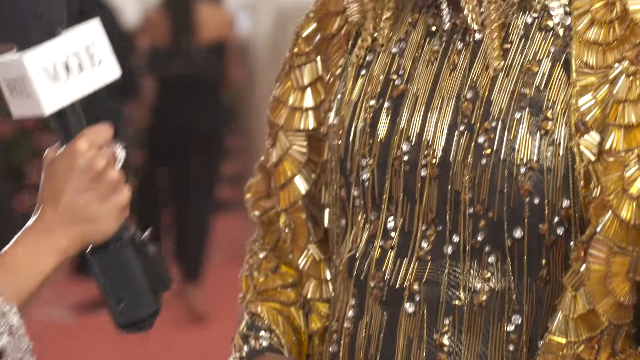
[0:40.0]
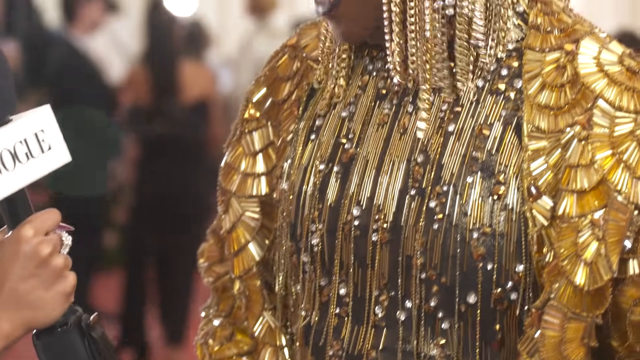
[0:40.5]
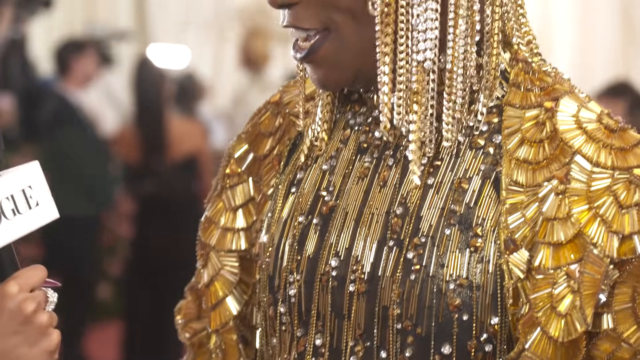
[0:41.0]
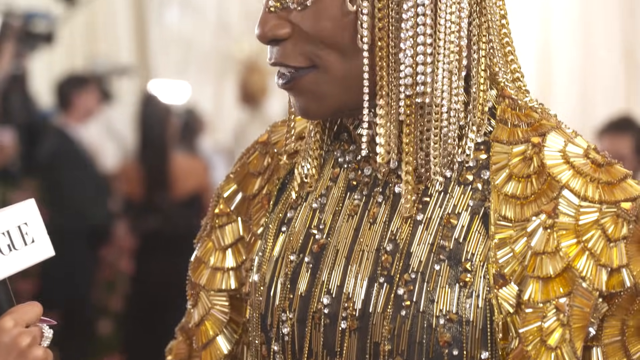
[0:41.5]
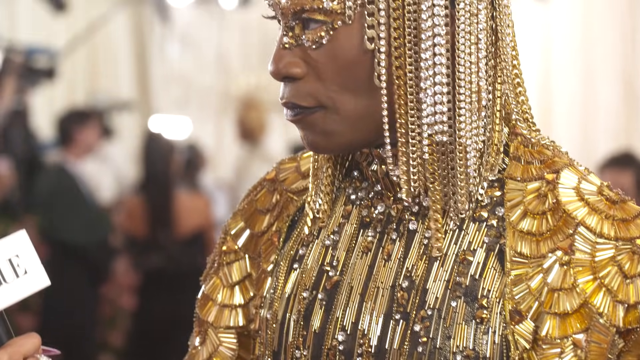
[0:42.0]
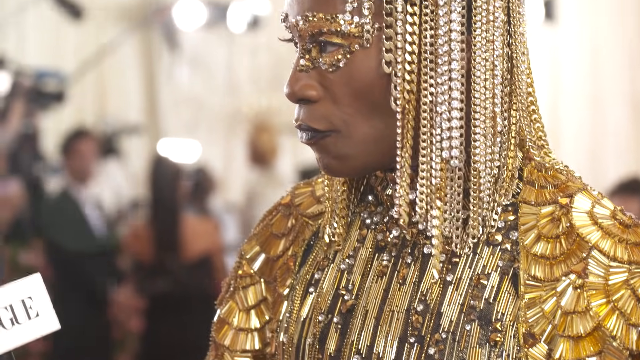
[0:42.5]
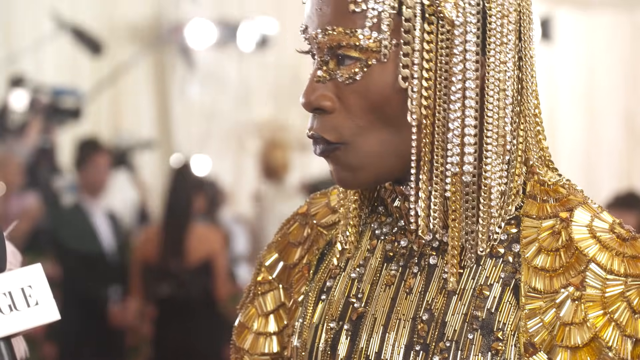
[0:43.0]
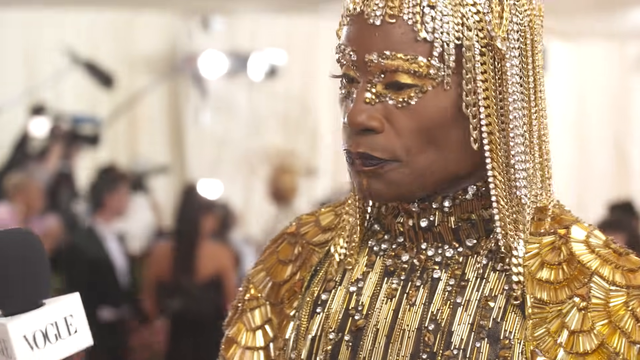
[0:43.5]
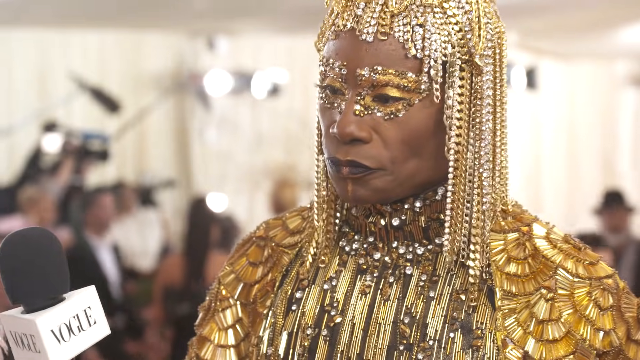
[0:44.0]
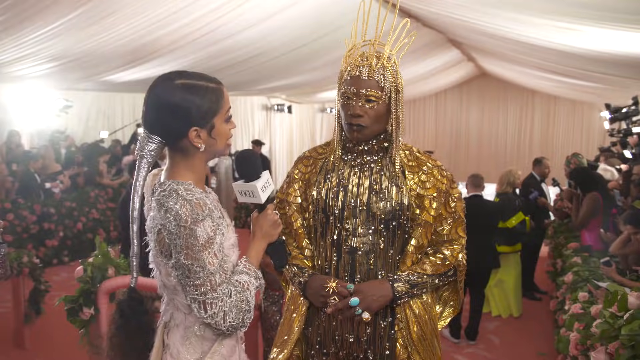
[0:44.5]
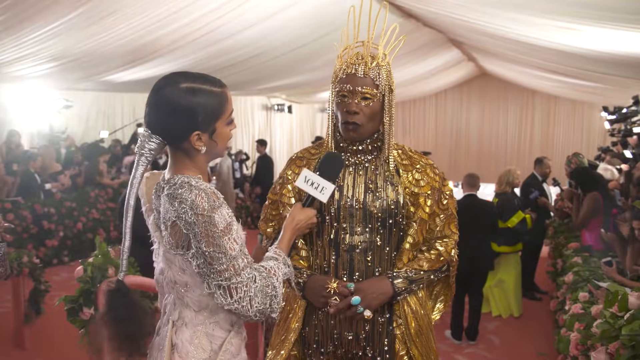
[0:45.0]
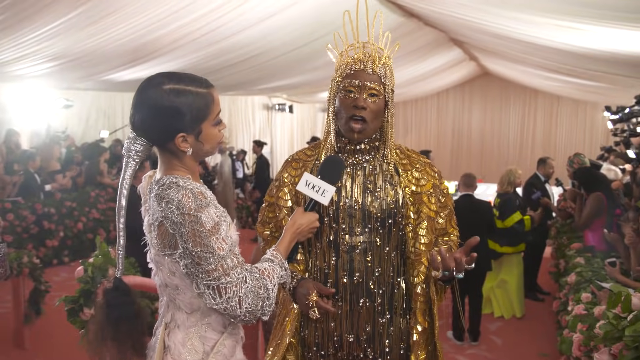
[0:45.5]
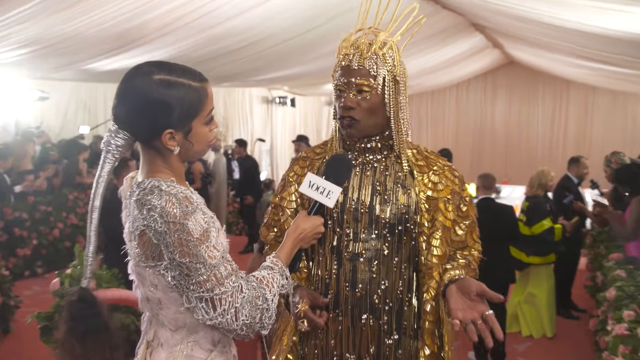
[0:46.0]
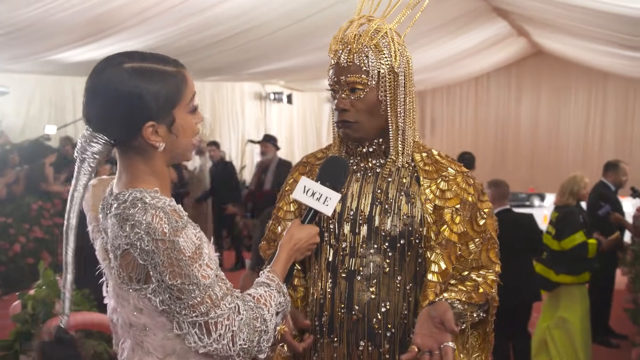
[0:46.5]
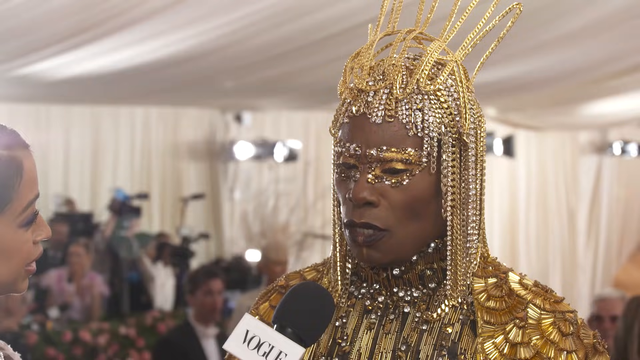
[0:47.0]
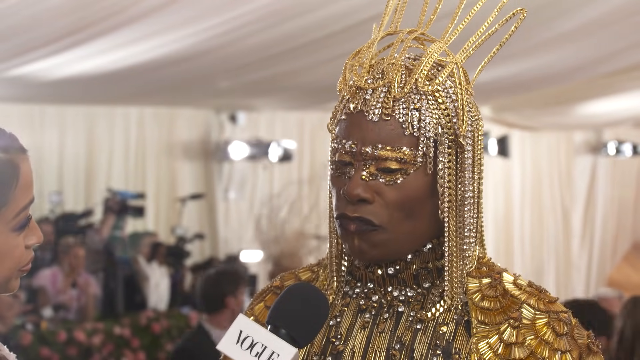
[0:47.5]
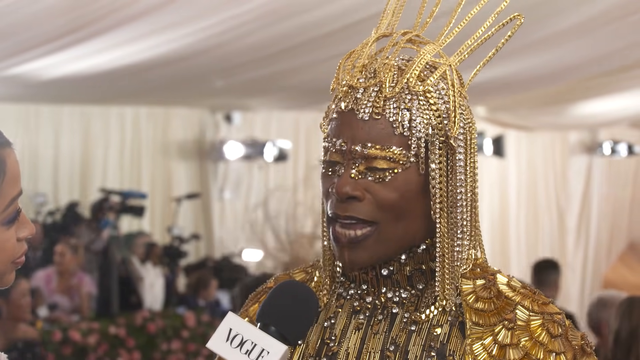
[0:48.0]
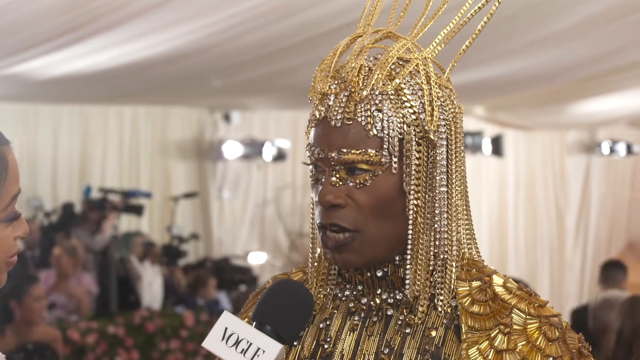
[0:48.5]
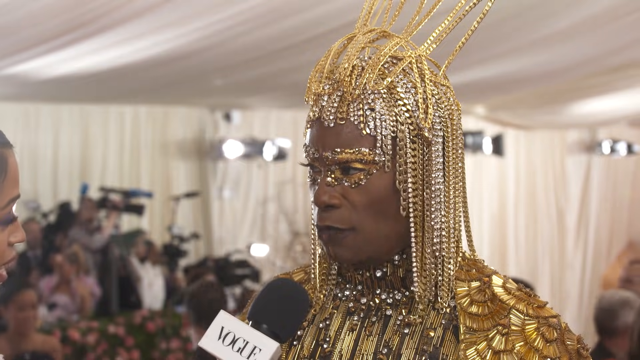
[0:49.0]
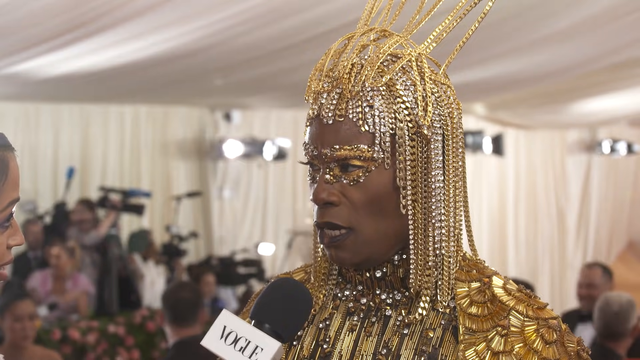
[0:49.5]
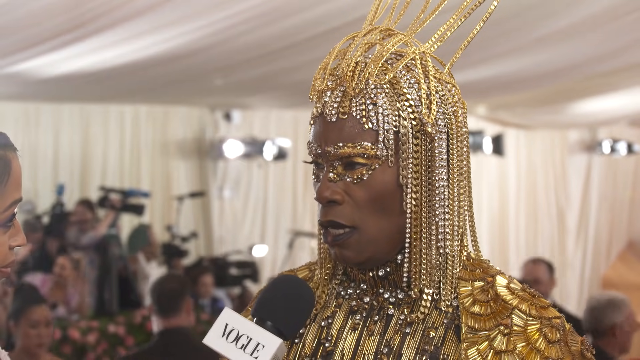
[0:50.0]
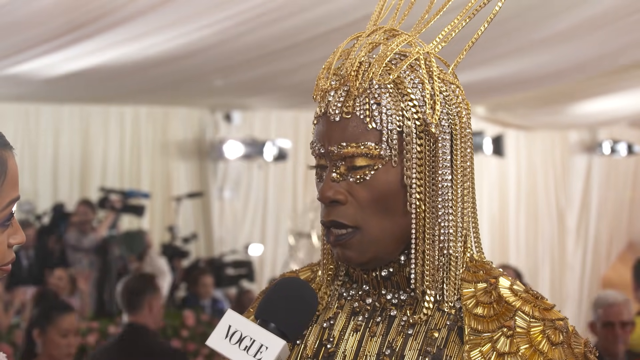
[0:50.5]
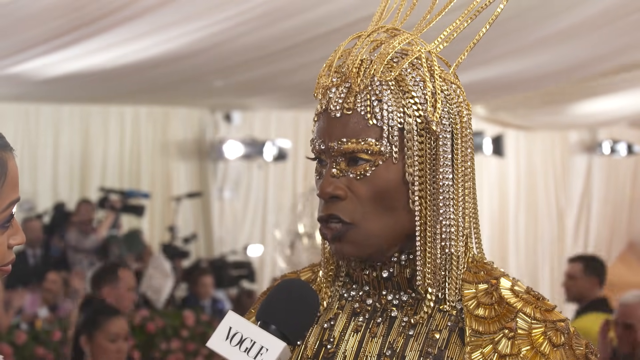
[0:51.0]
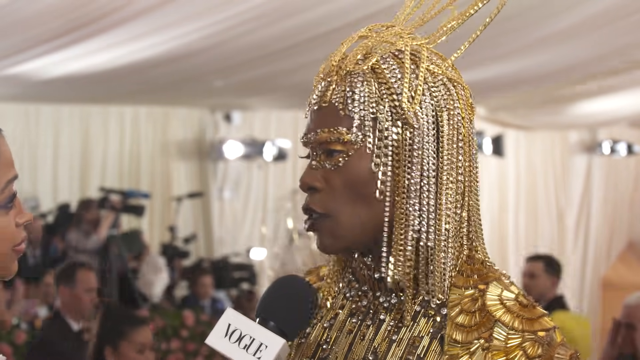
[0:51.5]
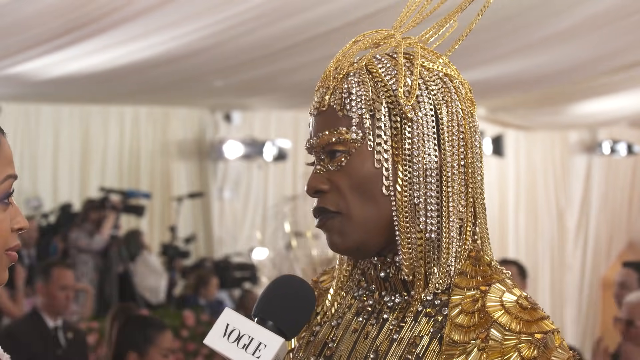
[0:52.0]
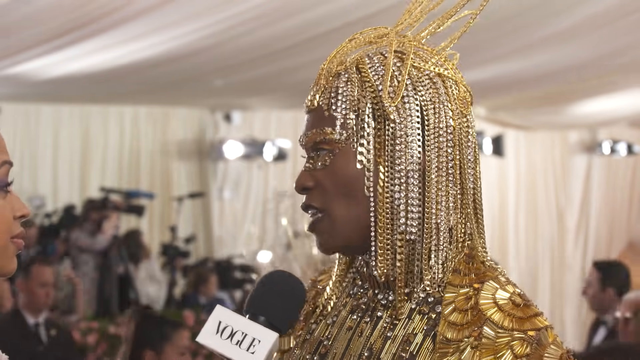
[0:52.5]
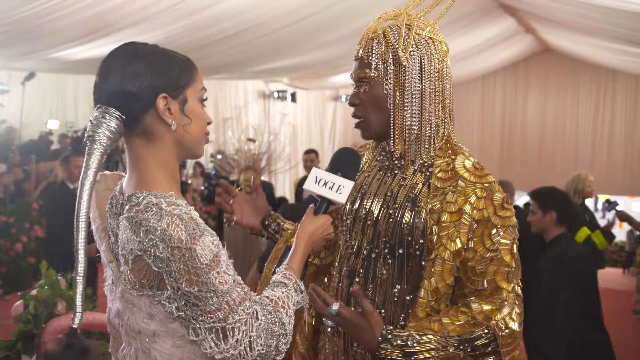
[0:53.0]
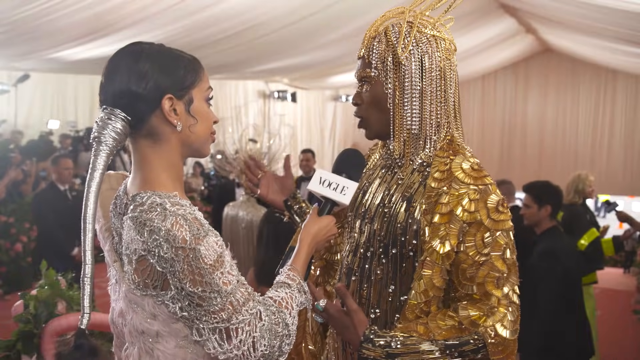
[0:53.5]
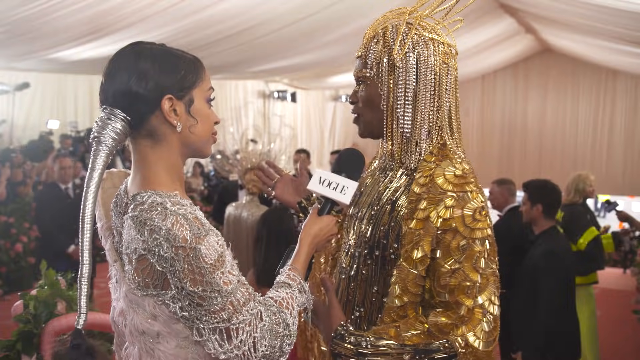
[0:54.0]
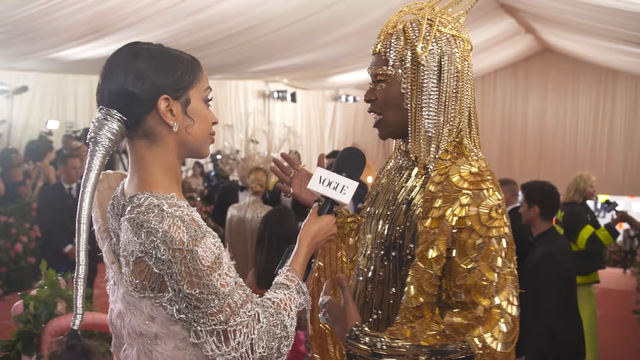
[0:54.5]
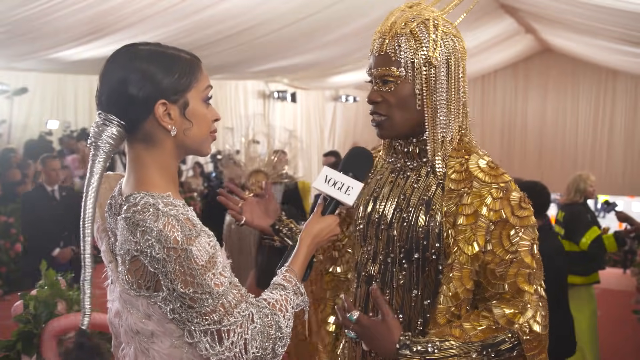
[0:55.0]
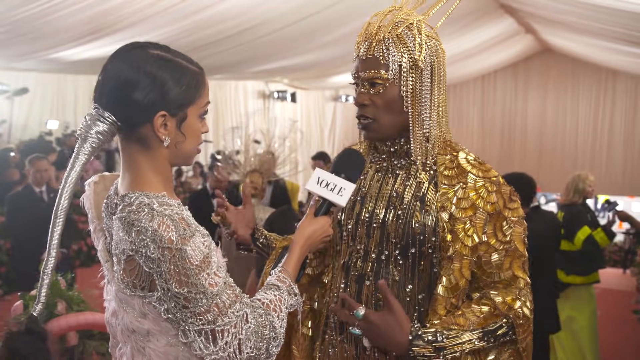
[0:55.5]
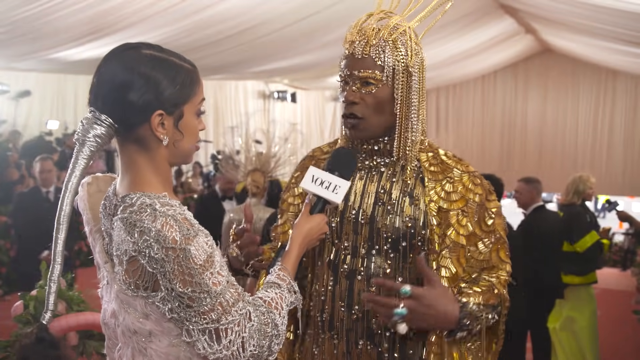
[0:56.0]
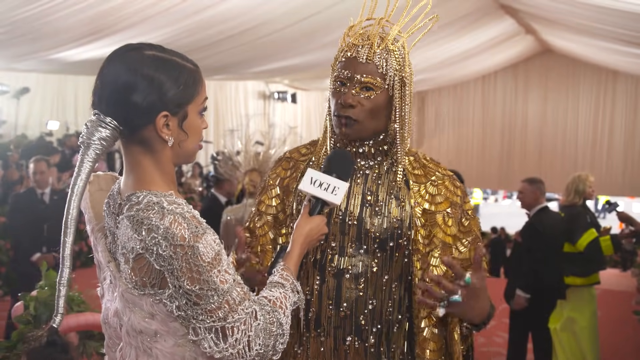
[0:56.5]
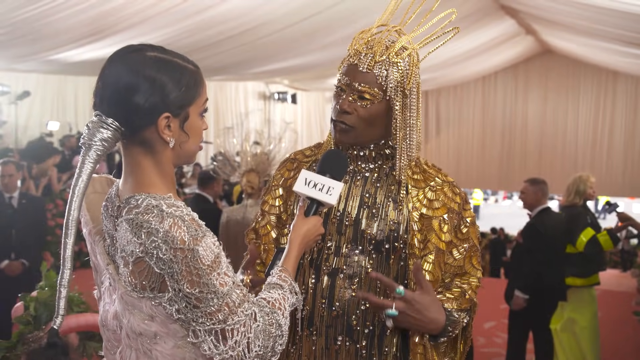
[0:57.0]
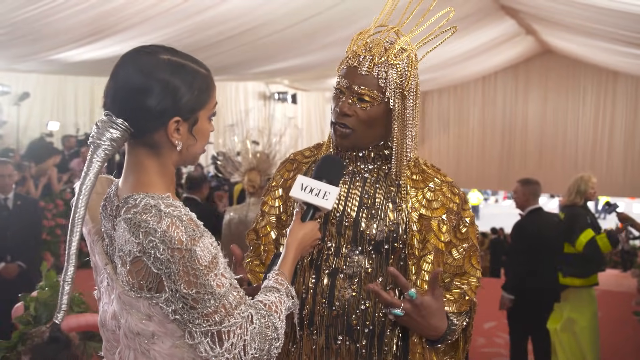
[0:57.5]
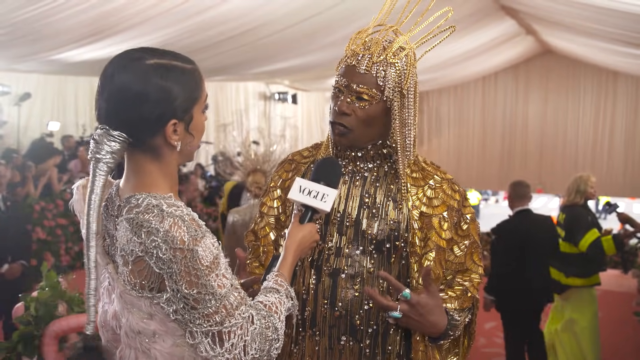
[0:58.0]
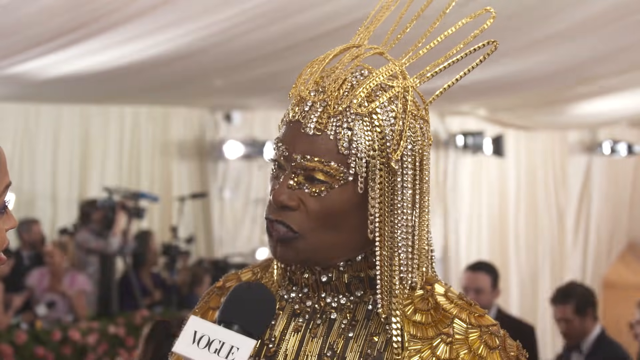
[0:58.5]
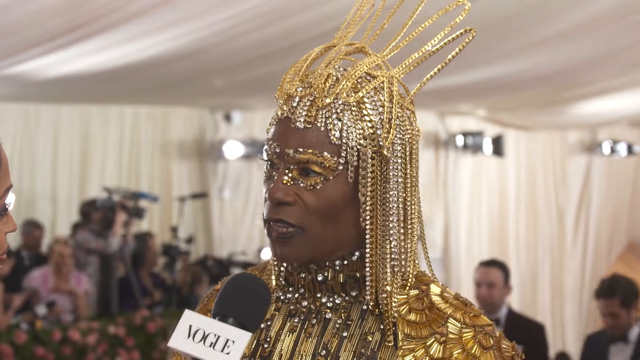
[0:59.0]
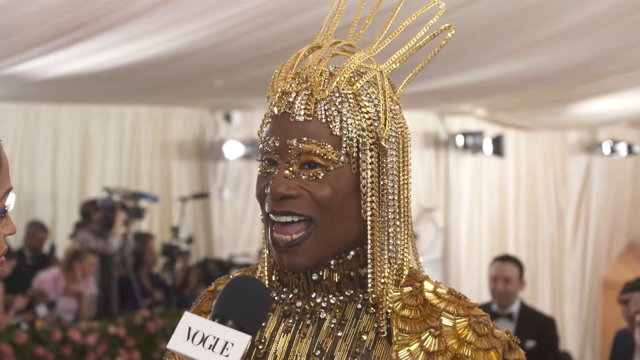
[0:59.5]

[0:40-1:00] A close-up shows the chest area of Billy's outfit, made up of many different shapes of gold metallic beading. Some of the beading looks like tiny gold metal tubes, and some looks like tiny gold metal fans, each fan making up a portion of the wings of the costume. The camera pans up to the gold headdress, which is made up of layers of gold chains in different tones of gold: white gold, 24 karat and 18 karat gold chains, some lighter and some darker, with a few appearing to be more of a champagne gold. Billy looks directly at the interviewer with a serious look on his face, seen in side profile. His eyes are made up in gold, with gold adornment around them in addition to gold metallic eye shadow. The view pans out a bit, showing Billy gesturing with his left hand, which has four very large rings, one on each finger; they look like the type of ring NFL players receive for winning the Super Bowl. The red carpet is visible in the background, with some people moving around and conversing on it.